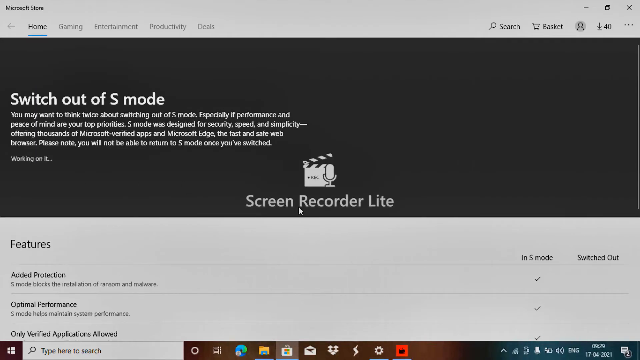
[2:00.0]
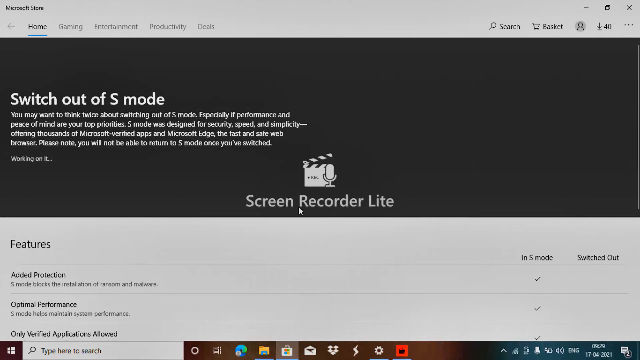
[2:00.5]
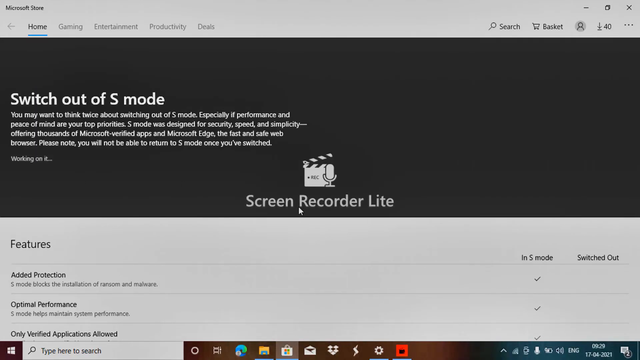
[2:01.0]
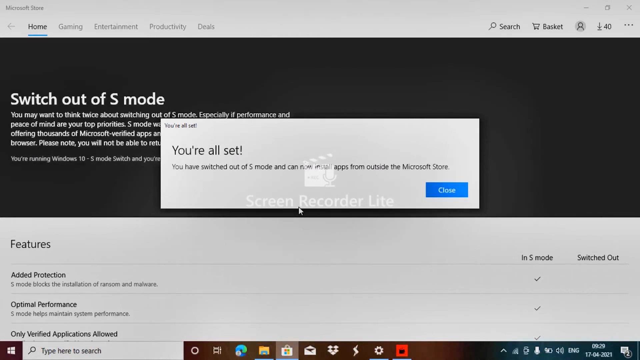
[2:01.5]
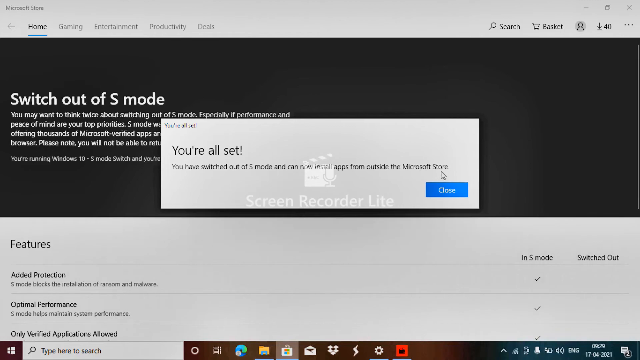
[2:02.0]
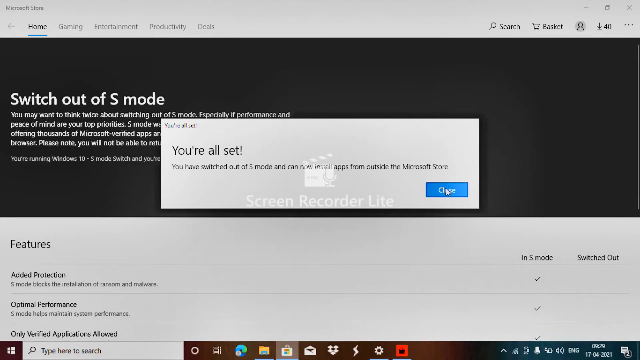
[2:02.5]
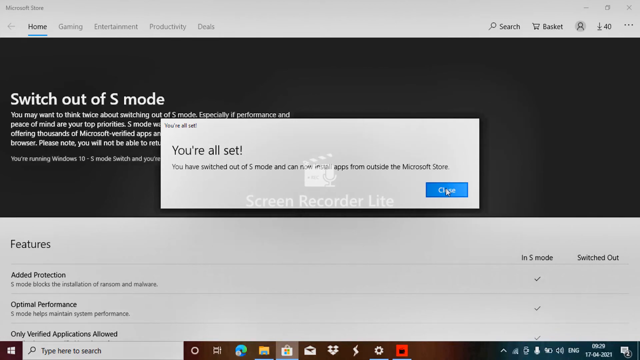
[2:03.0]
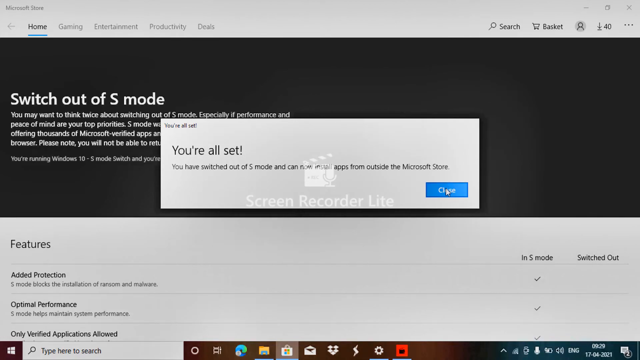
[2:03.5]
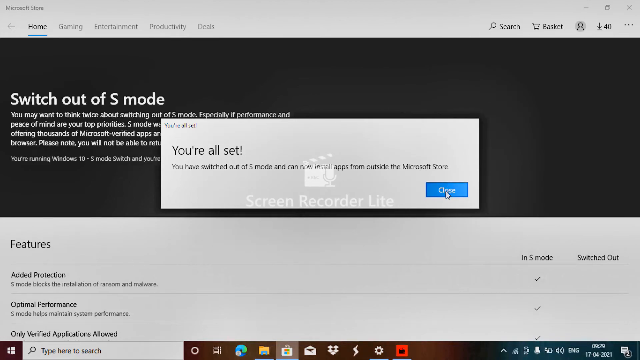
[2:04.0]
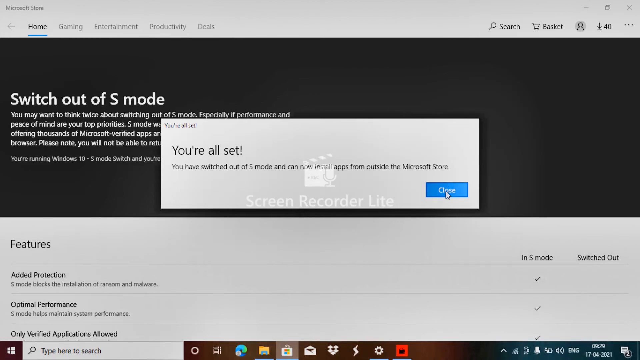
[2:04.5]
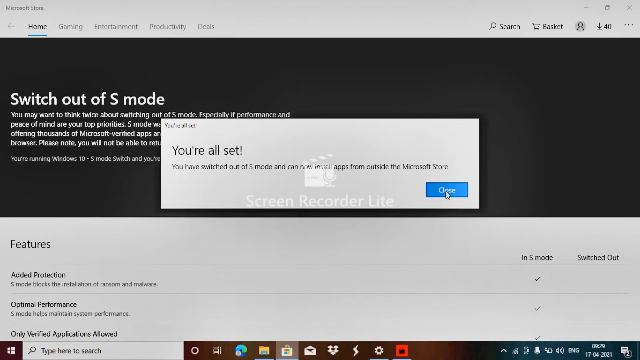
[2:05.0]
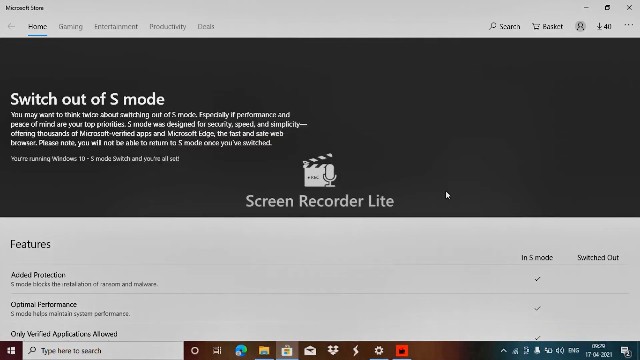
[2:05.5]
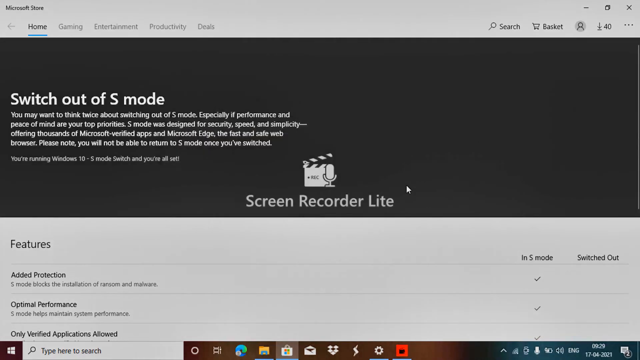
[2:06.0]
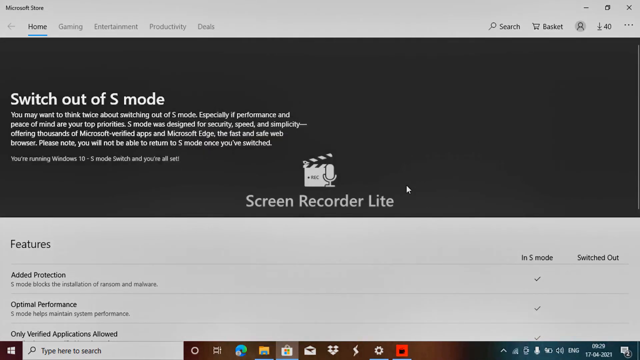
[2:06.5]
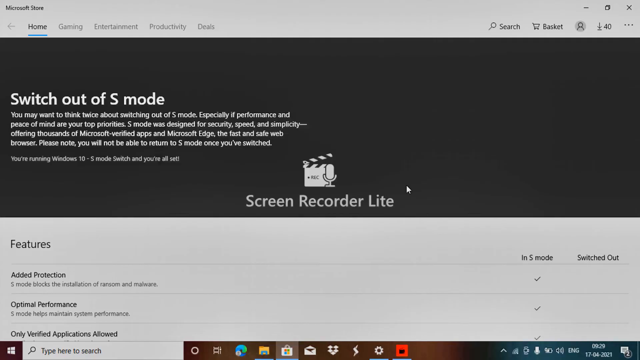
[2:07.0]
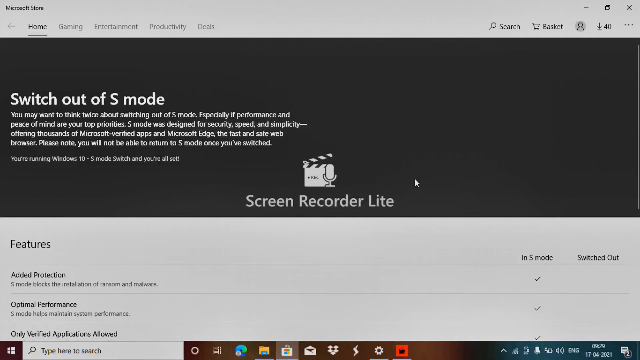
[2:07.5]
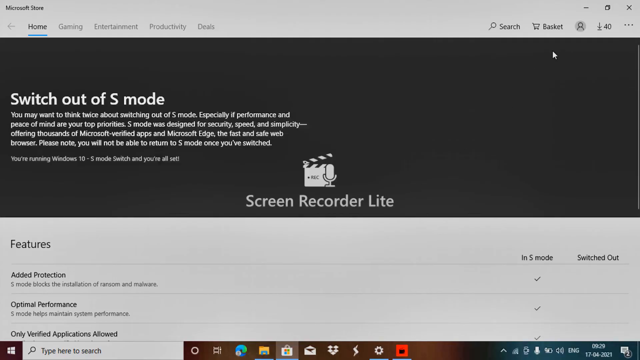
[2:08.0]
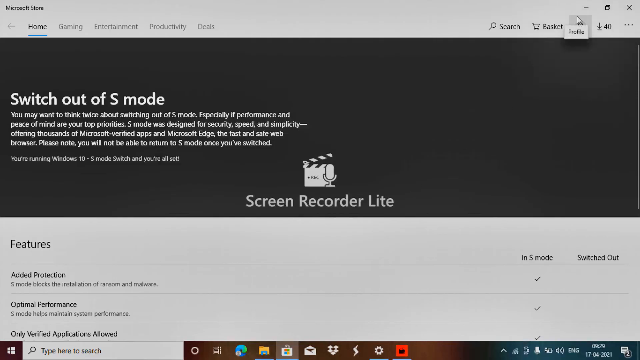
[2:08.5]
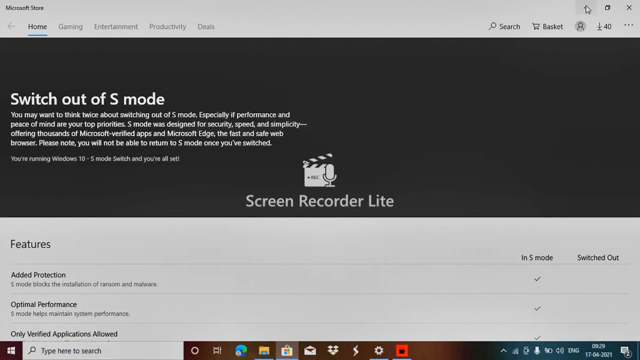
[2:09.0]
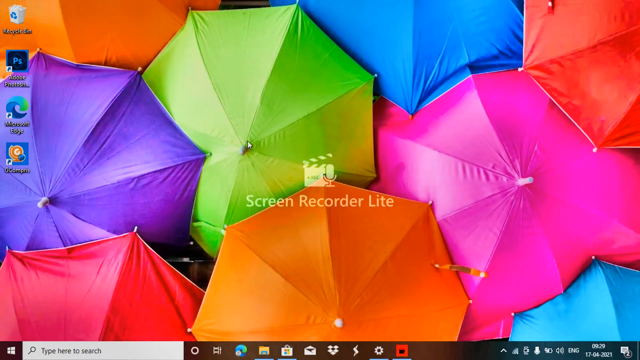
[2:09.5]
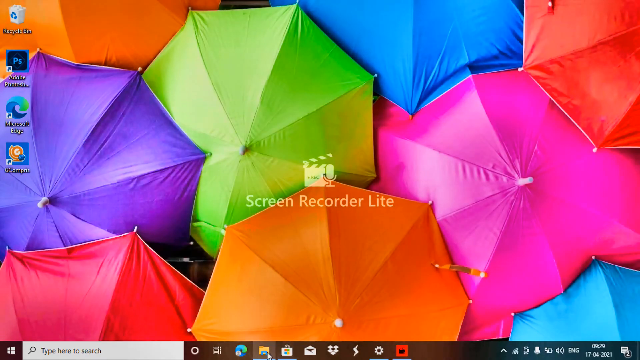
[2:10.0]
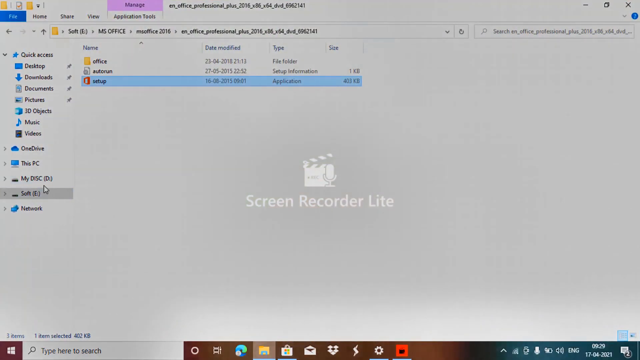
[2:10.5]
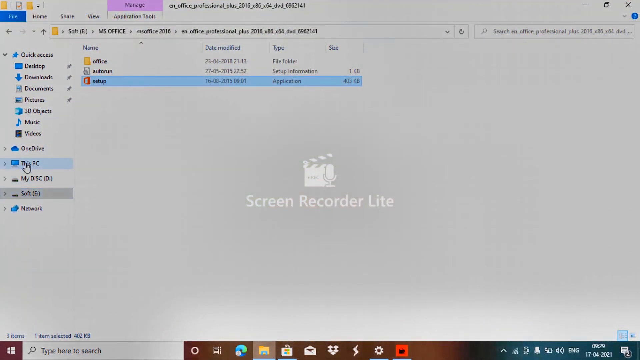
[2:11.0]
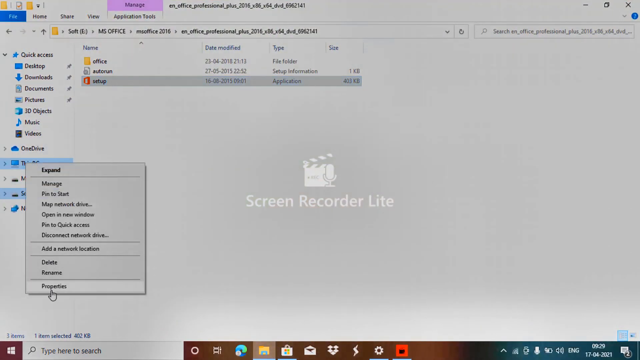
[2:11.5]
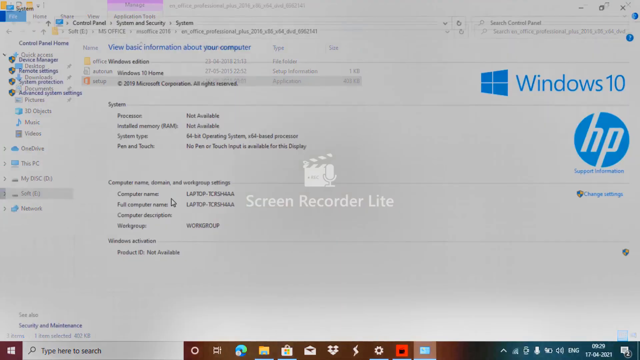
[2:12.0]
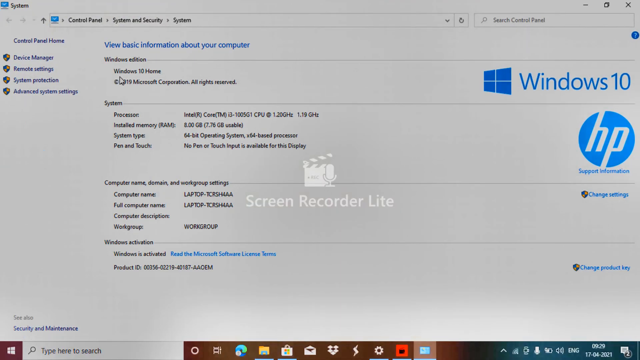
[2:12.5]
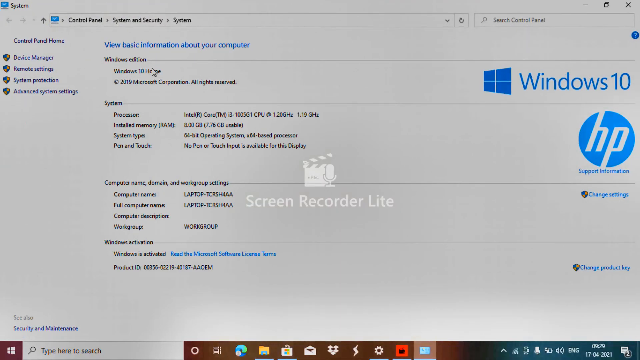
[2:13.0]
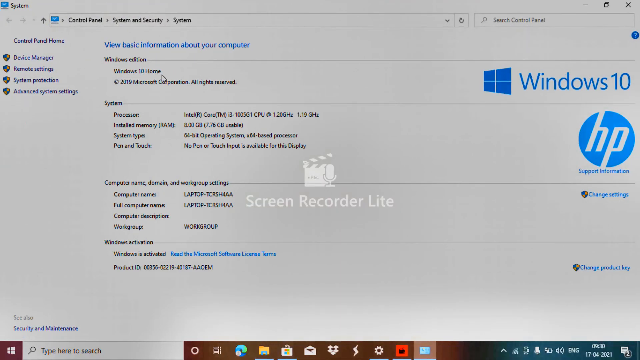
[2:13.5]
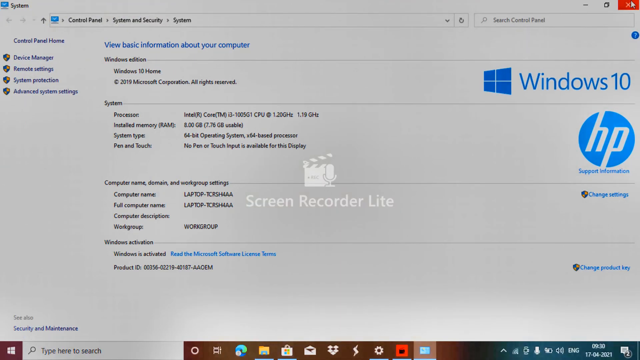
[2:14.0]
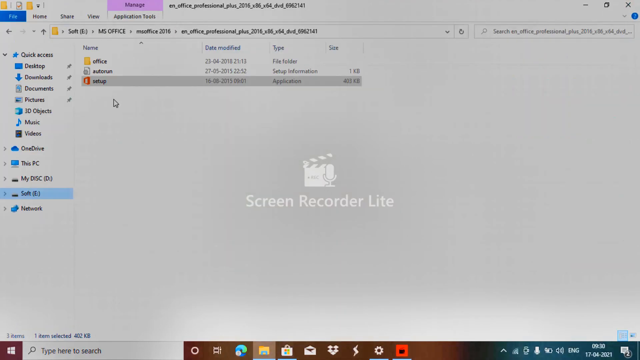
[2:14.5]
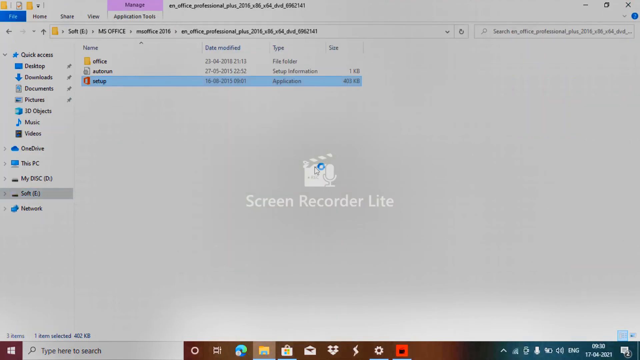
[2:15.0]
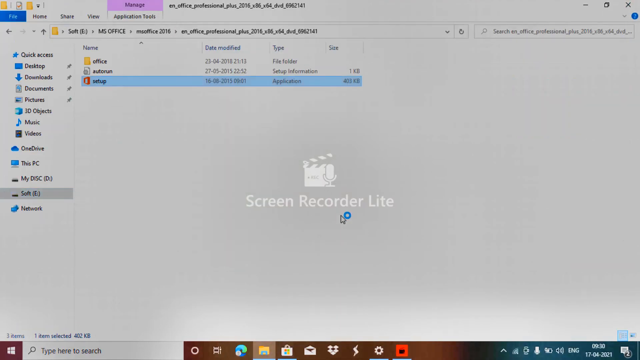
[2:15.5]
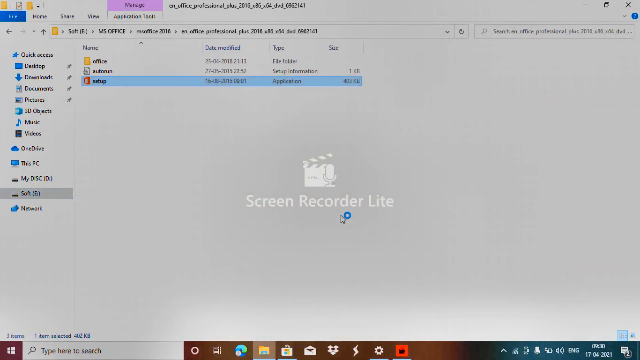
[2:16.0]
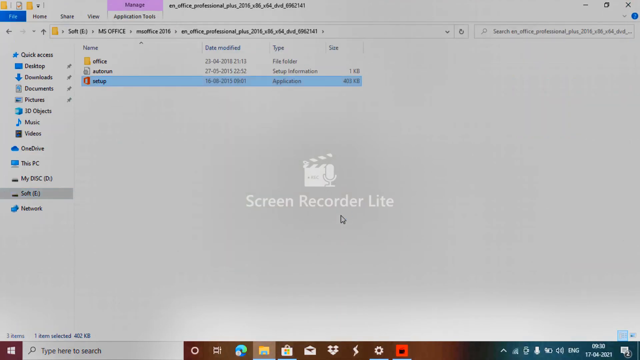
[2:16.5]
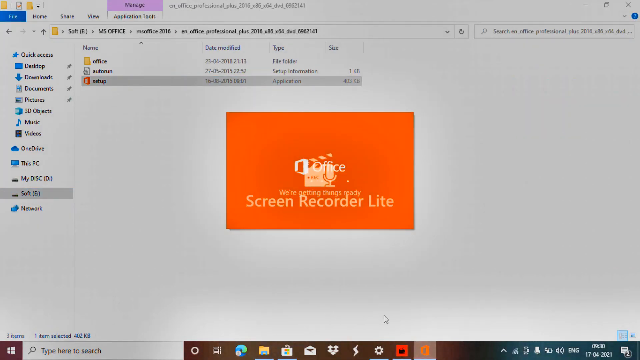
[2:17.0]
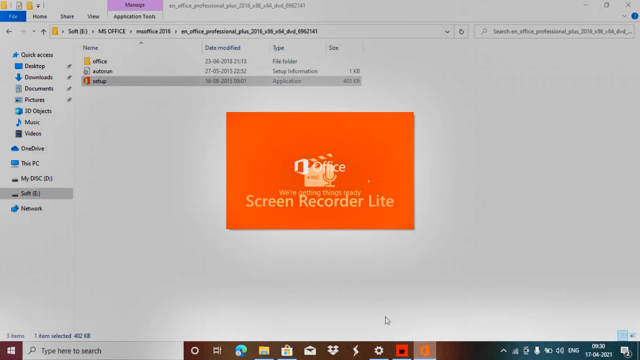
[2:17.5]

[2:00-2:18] A smaller pop-up says "you're all set", with smaller text reading "you have switched out of S mode and can now install apps from outside the Microsoft Store", and a blue button that says "close", which is clicked. The "screen recorder light" watermark is still visible, as is the Microsoft Store page with the switch out of S mode icon. The person closes the Store app, goes back to the files and opens Properties under This PC, which now says Windows 10 Home without any other mode. They then open an app called setup with an orange icon; its loading screen shows an old Office logo centered in a small orange rectangle, with text saying "we're getting things ready" overlapping the watermark.